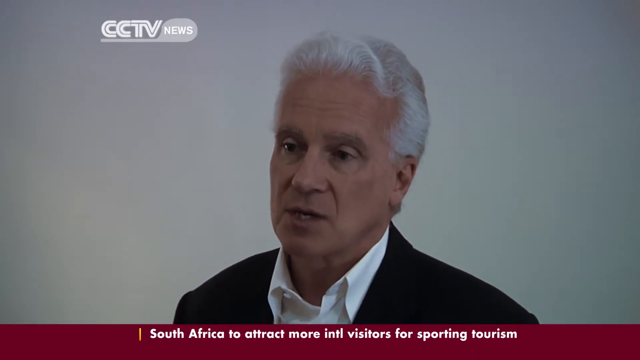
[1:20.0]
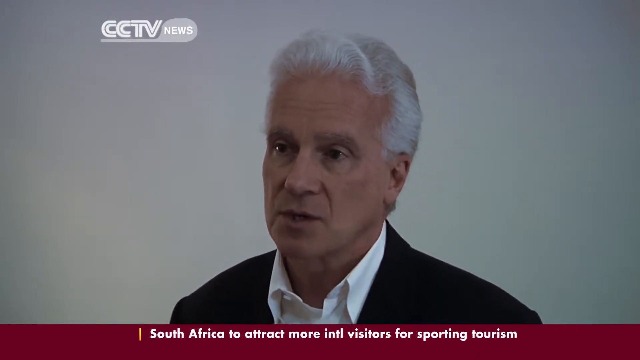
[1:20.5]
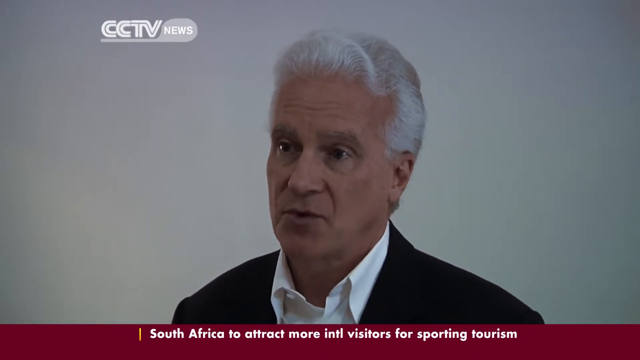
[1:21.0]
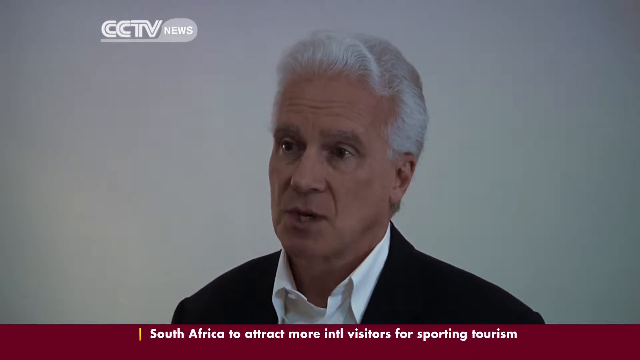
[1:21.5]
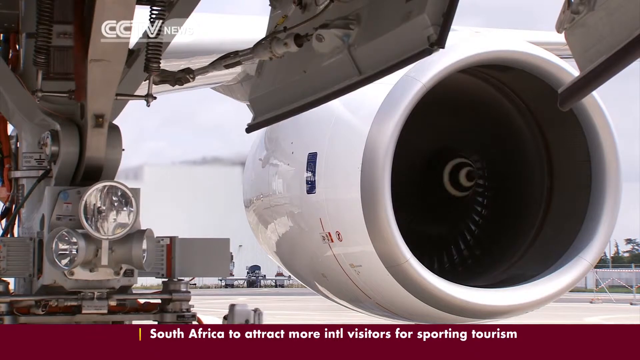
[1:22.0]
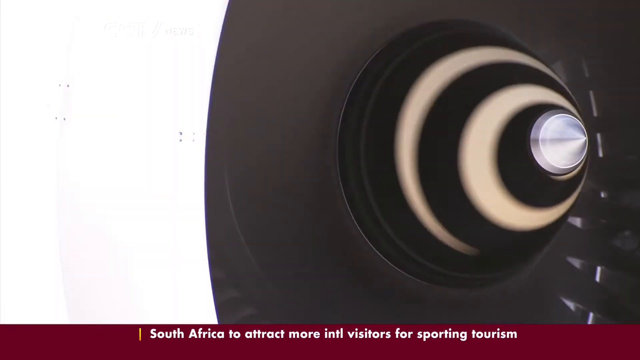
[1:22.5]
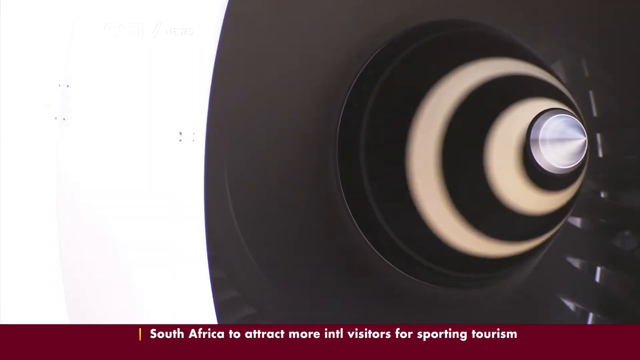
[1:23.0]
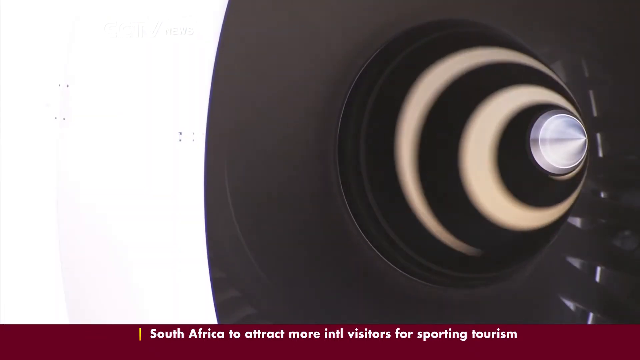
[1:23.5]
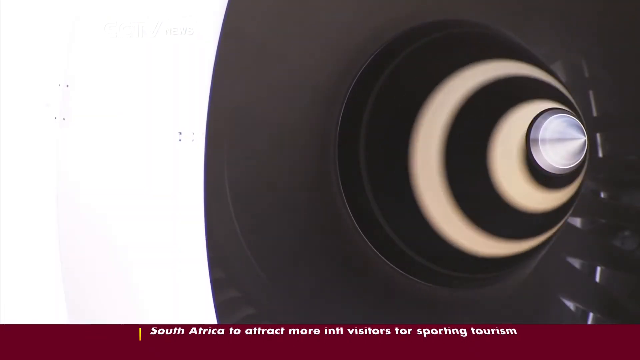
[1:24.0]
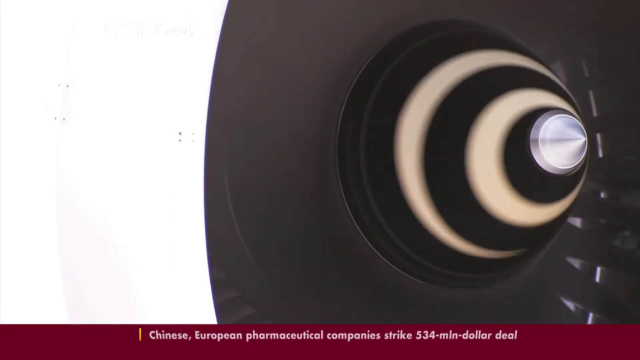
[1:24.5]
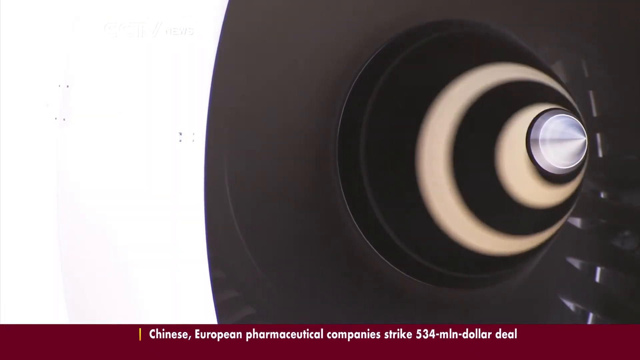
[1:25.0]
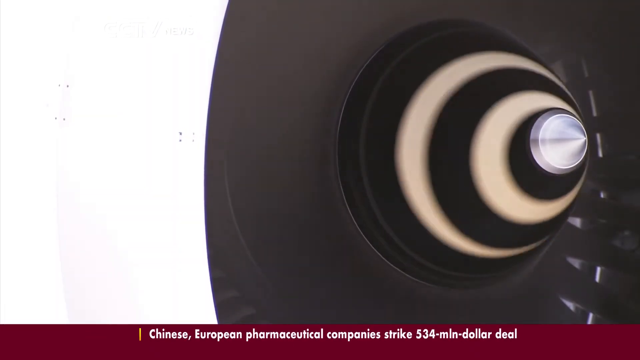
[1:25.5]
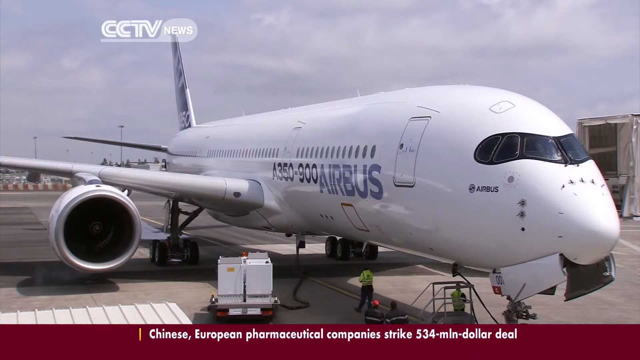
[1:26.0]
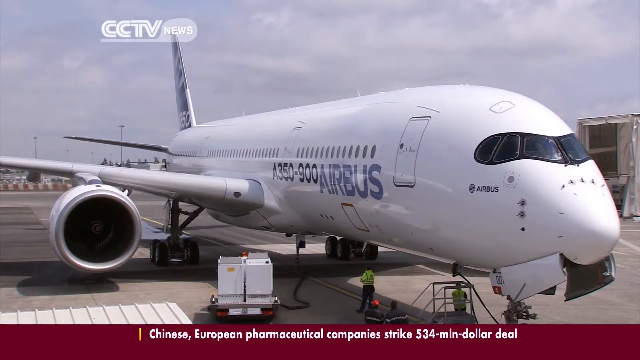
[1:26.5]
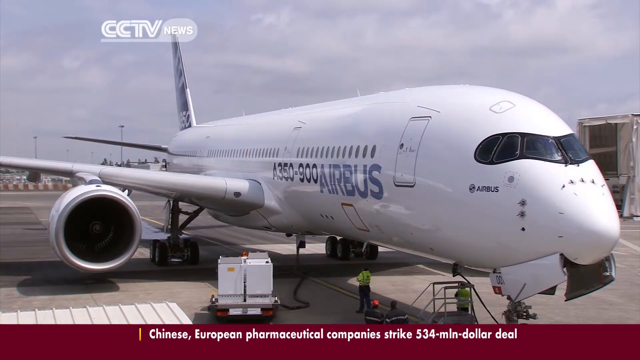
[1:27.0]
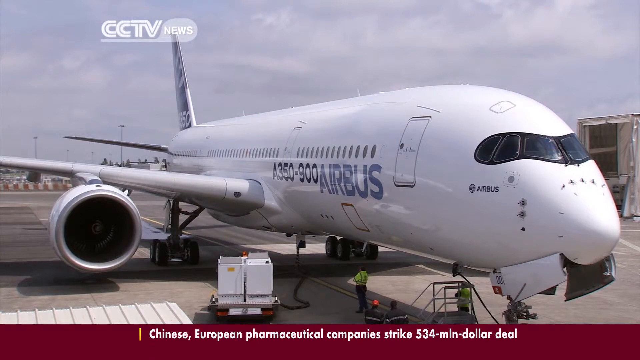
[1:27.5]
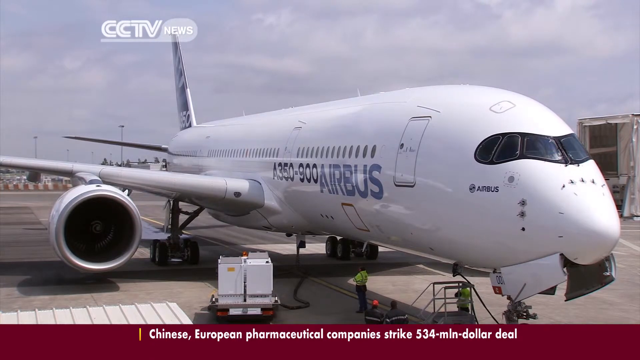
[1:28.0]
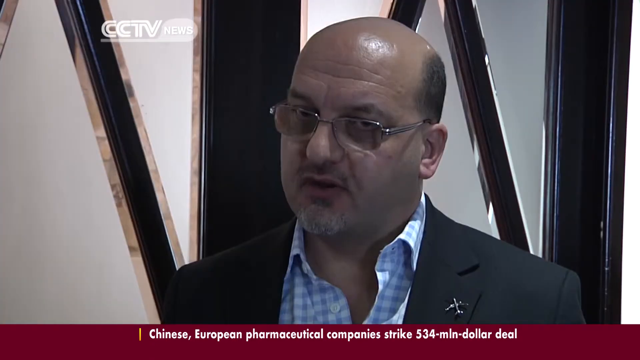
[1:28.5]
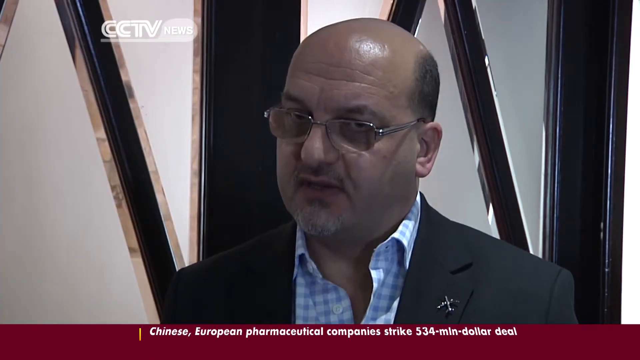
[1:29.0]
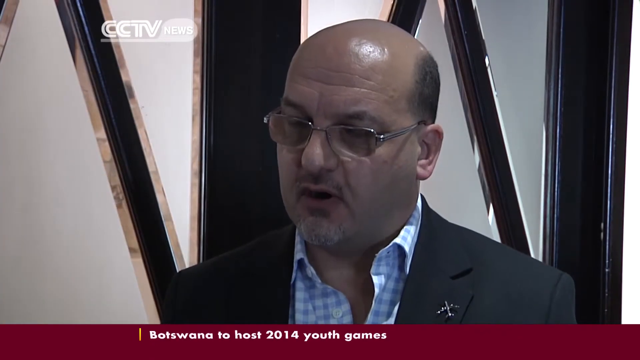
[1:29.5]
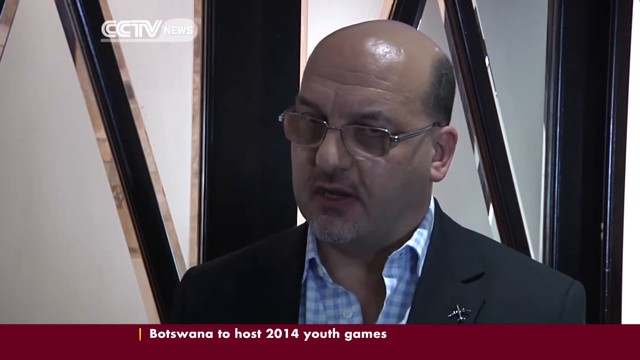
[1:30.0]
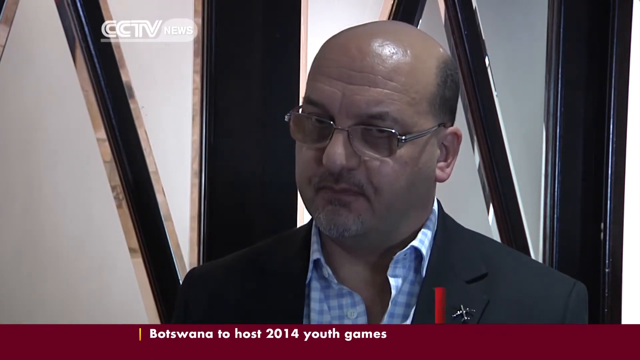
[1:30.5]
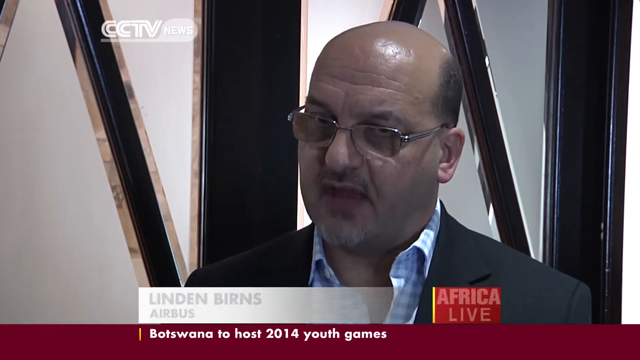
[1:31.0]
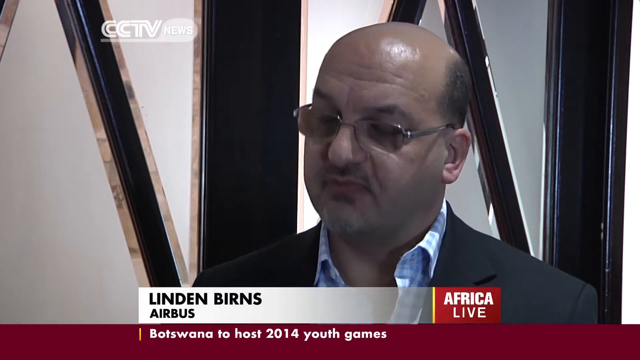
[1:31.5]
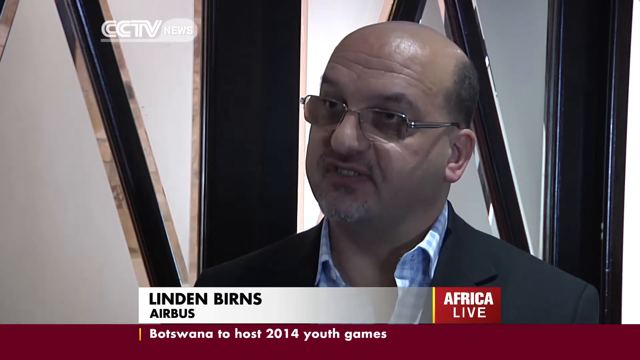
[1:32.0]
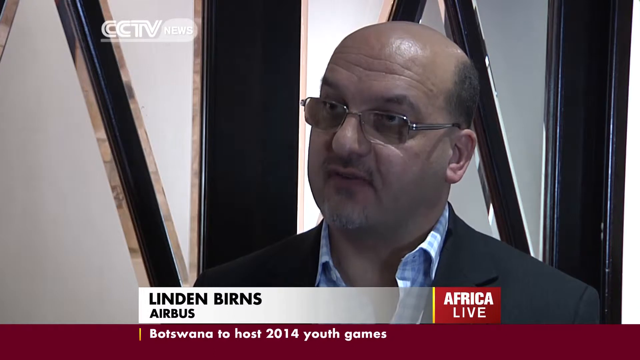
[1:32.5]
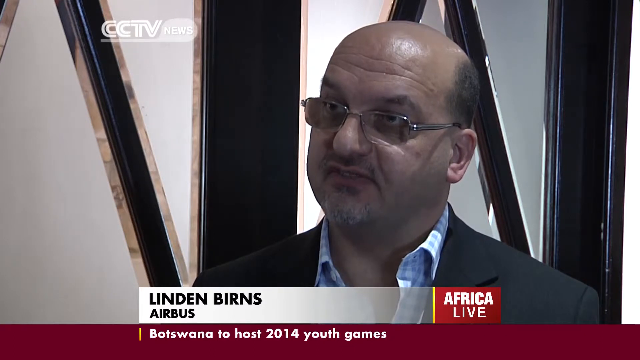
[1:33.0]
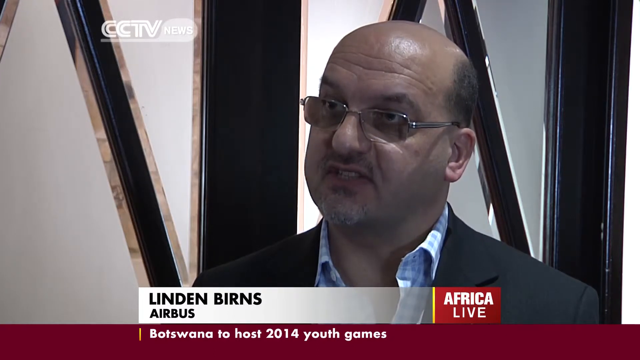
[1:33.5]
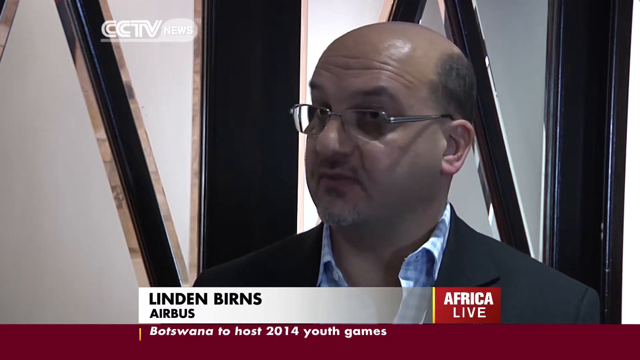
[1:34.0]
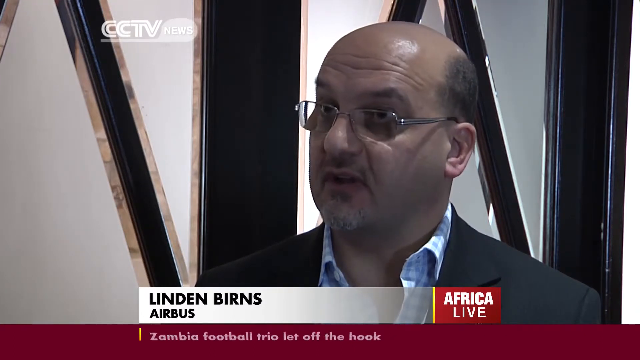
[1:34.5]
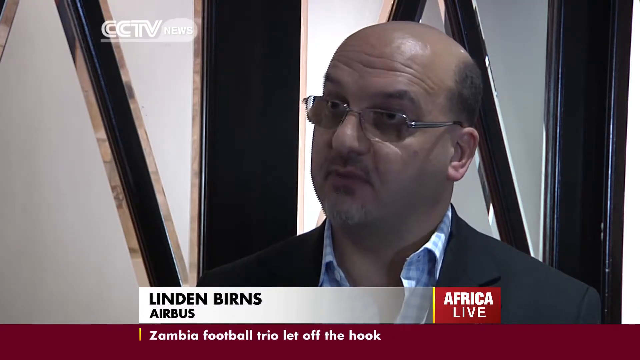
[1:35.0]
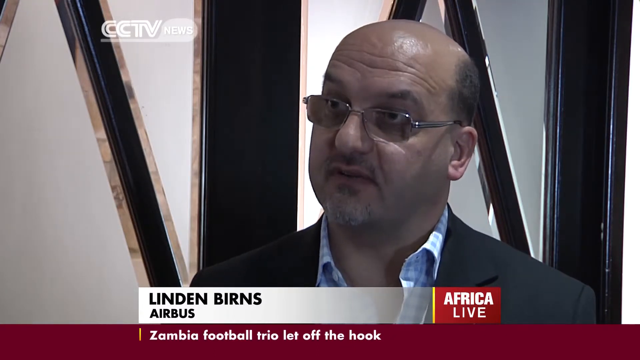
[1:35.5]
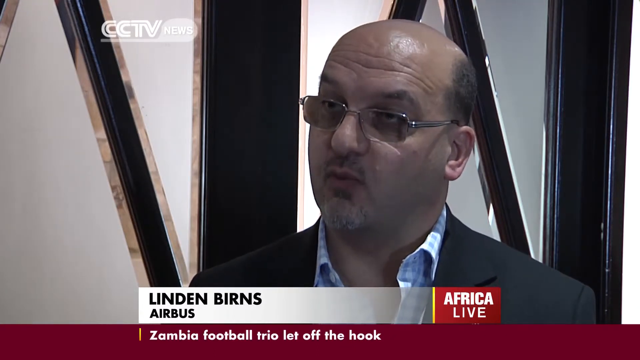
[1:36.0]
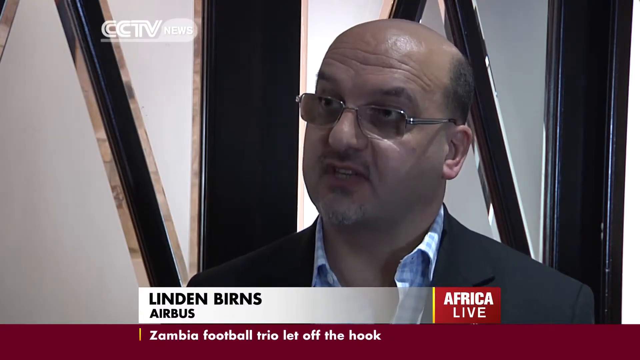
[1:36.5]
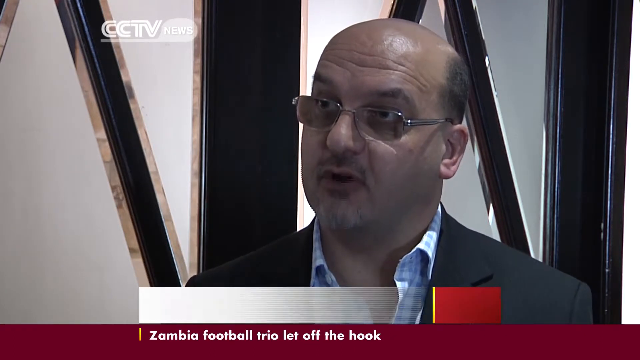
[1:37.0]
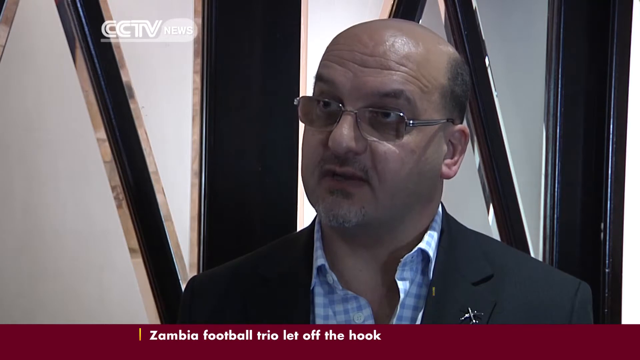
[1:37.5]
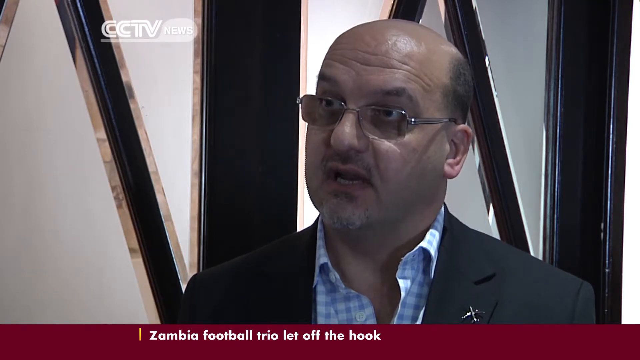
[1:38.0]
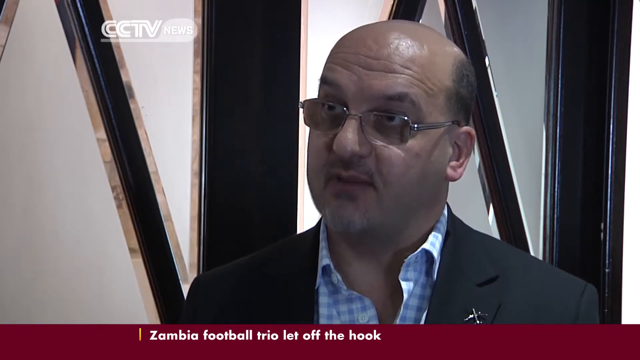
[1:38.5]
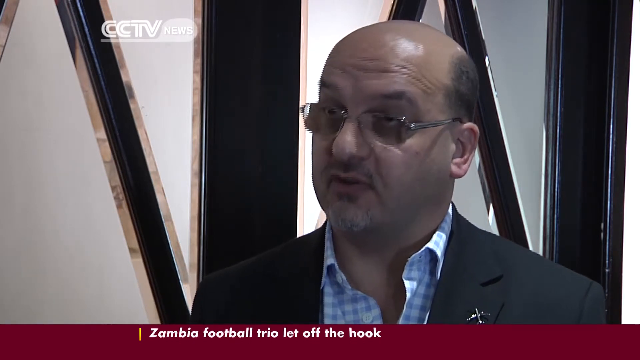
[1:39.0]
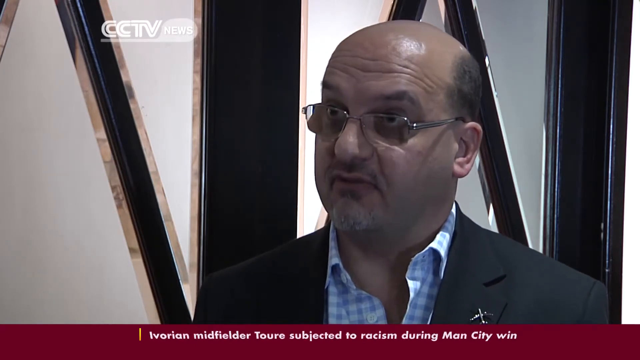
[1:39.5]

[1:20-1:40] The camera looks inside one of the engines as it spins very fast, then looks into another engine that almost resembles a pinwheel; it is surrounded by black, so the white shows up. An Airbus is then shown, all white except for gray where the wings attach, and its tail appears to have blue on it. Black lettering on a white background on the side reads "A350-900", and blue lettering reads "Airbus". There is a small door up front, apparently just for the cockpit. Men are working on the plane, and someone is washing its underside. A compartment under the nose is open; its purpose is unclear. On the ground is a cart that looks like it is on wheels and appears to carry a washer, though it is hard to see. Next, Mr. Lyndon Byrns from Airbus talks briefly before the video switches back to the Boeing man.